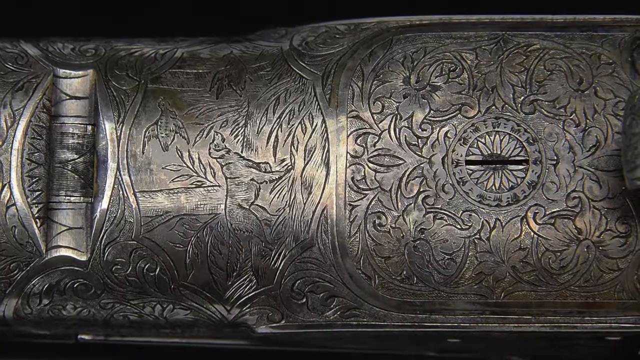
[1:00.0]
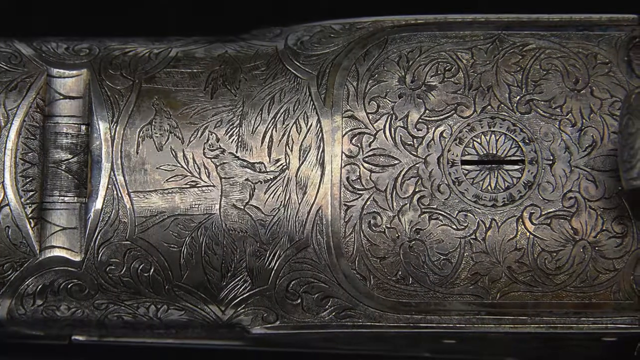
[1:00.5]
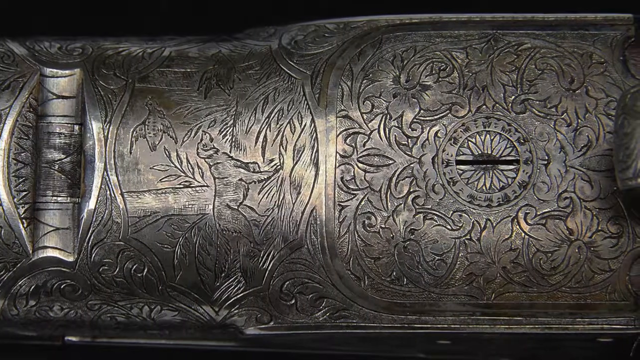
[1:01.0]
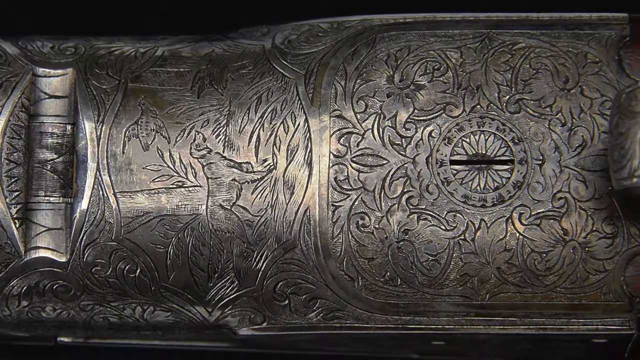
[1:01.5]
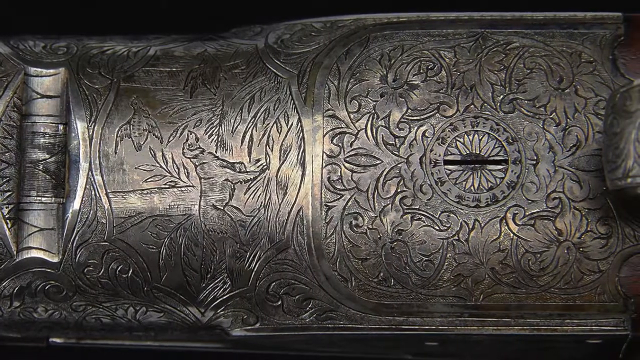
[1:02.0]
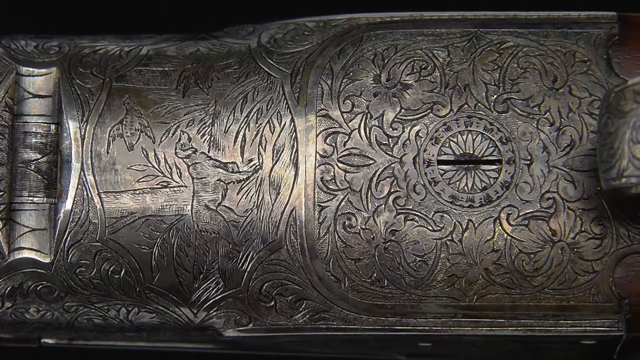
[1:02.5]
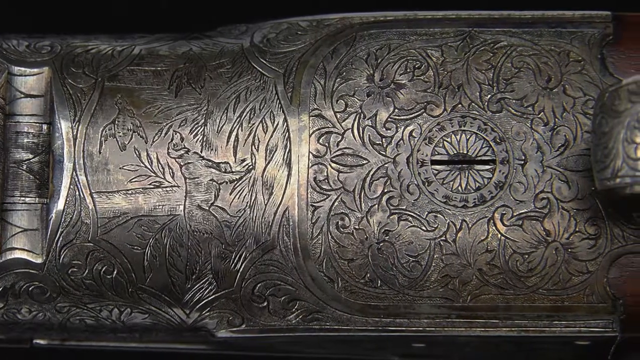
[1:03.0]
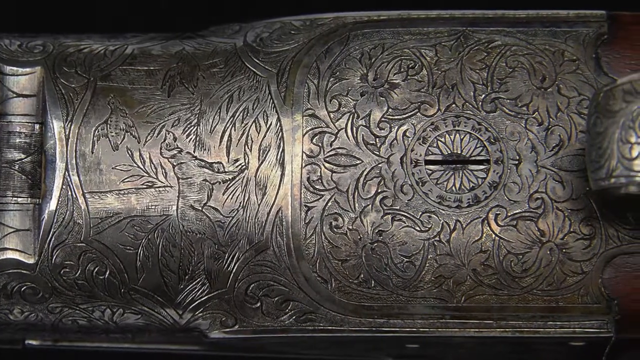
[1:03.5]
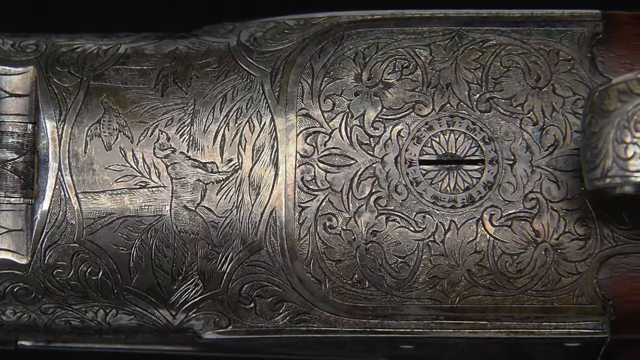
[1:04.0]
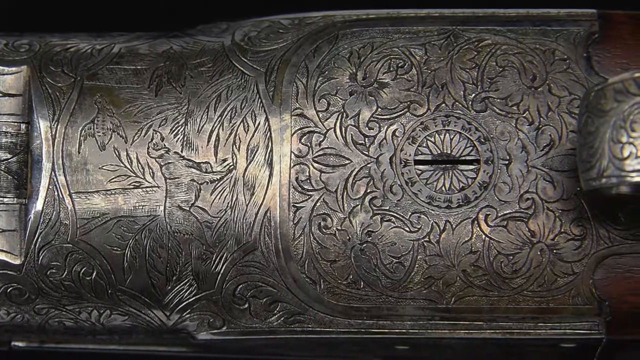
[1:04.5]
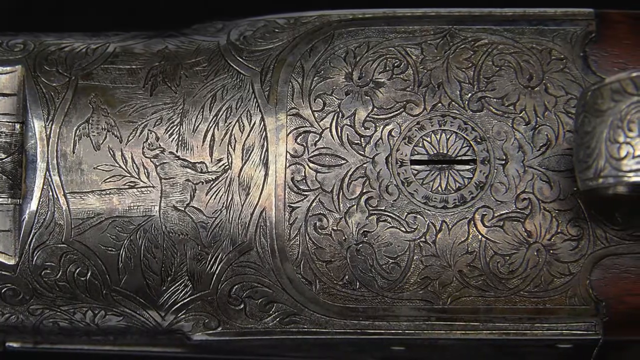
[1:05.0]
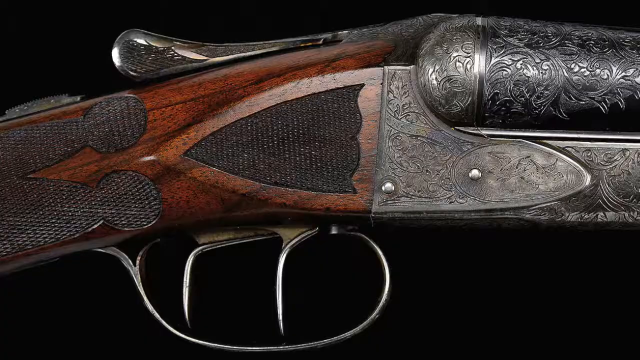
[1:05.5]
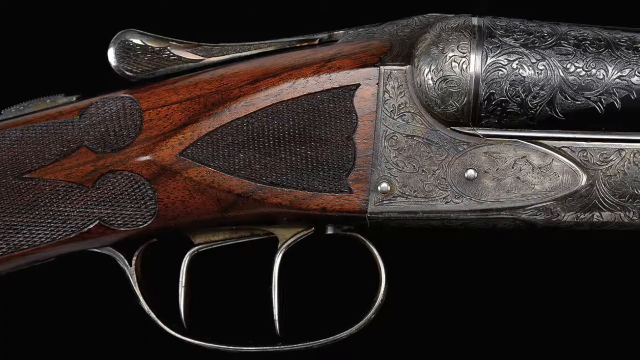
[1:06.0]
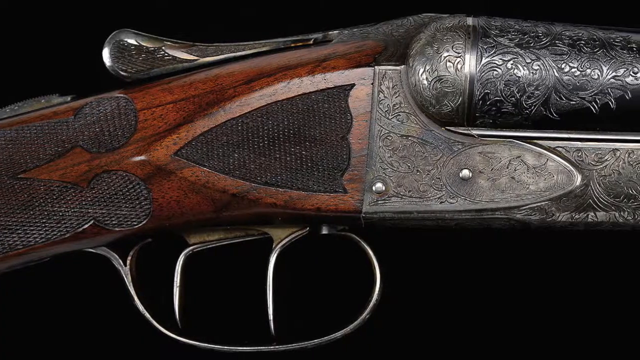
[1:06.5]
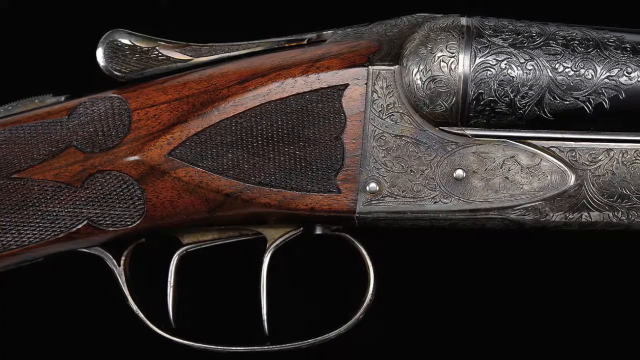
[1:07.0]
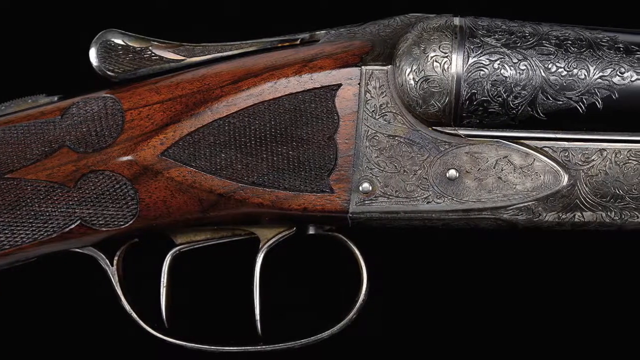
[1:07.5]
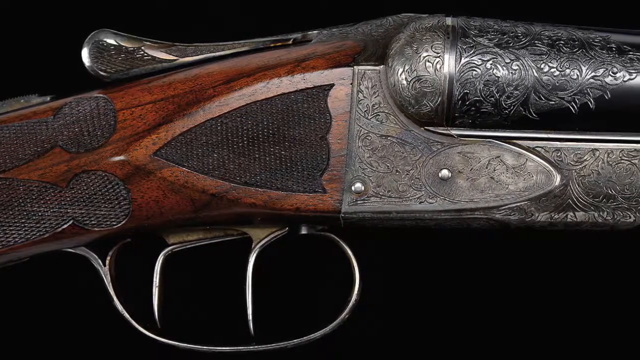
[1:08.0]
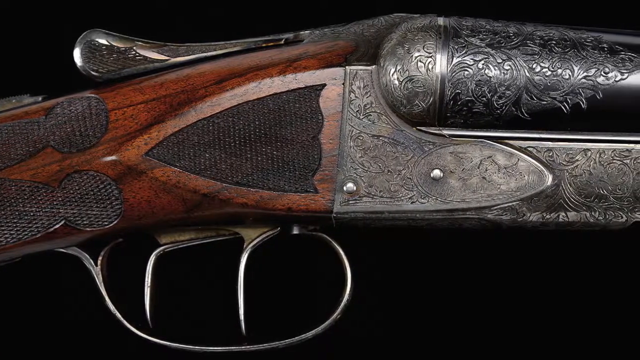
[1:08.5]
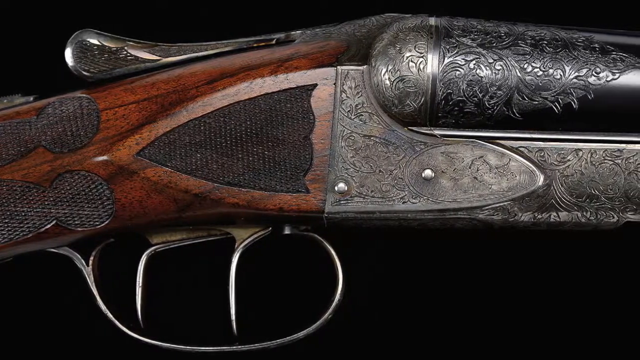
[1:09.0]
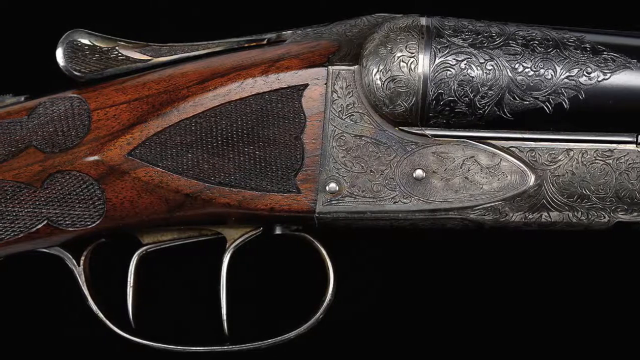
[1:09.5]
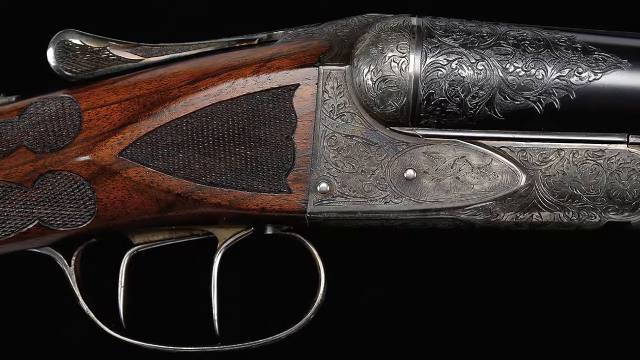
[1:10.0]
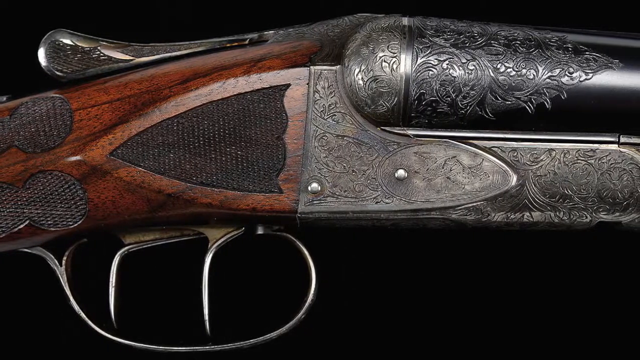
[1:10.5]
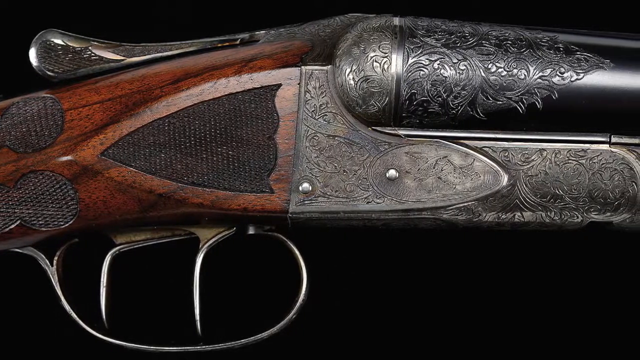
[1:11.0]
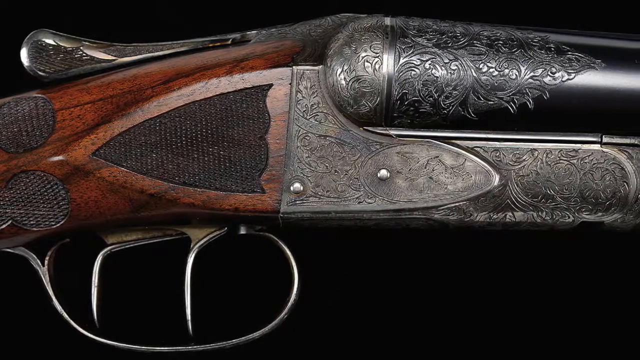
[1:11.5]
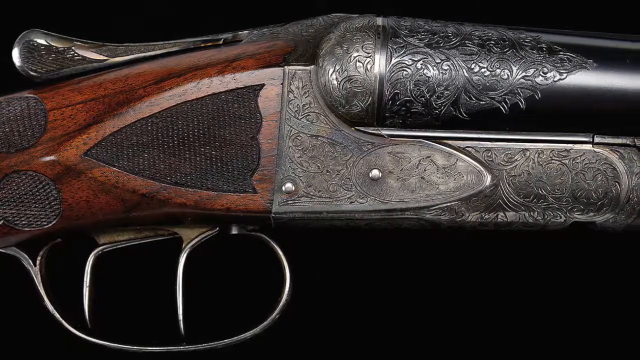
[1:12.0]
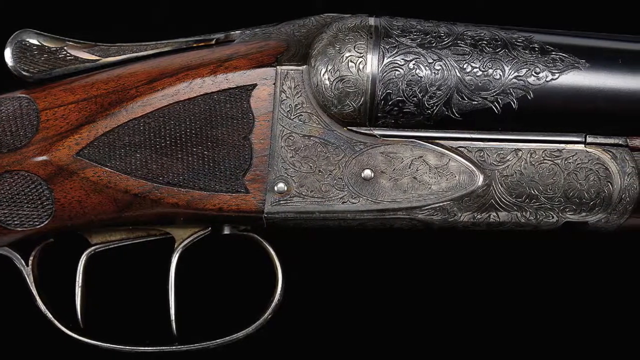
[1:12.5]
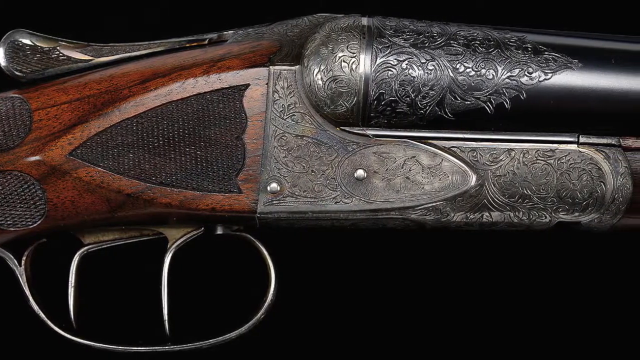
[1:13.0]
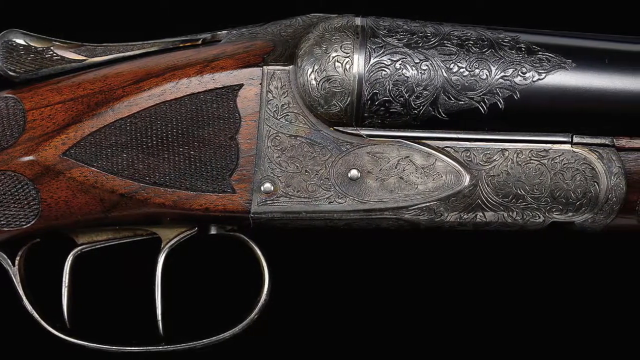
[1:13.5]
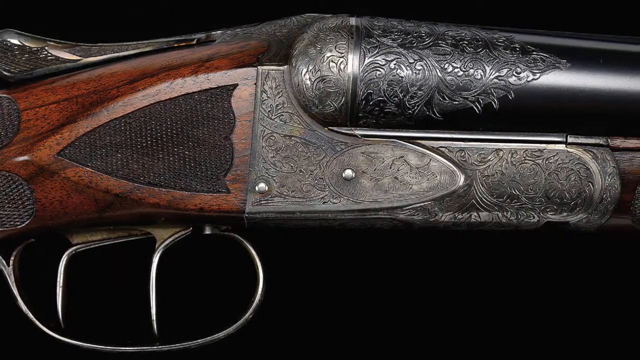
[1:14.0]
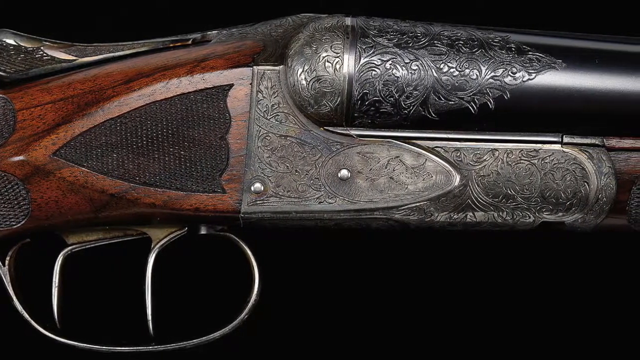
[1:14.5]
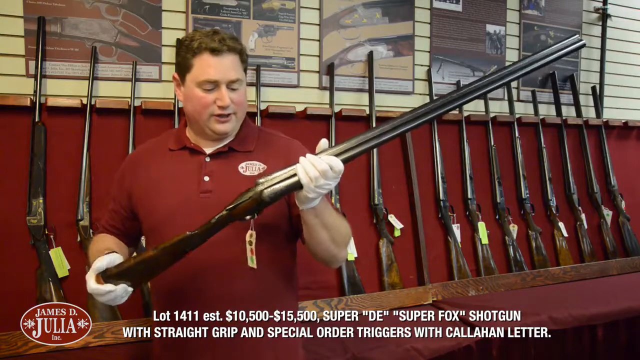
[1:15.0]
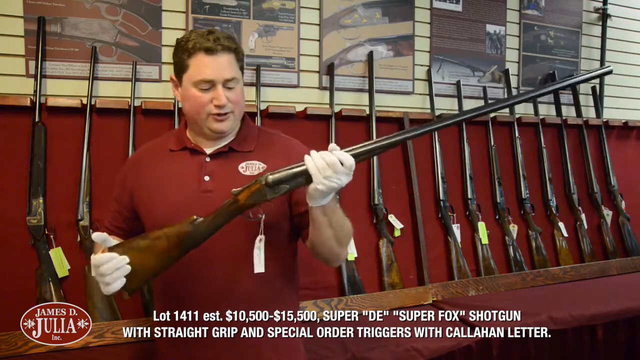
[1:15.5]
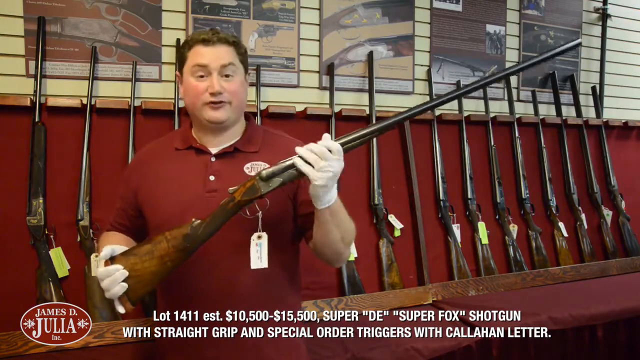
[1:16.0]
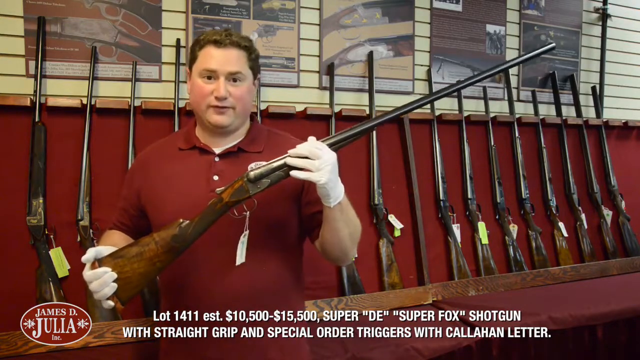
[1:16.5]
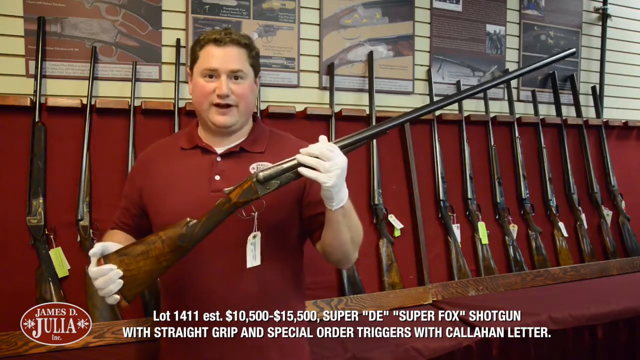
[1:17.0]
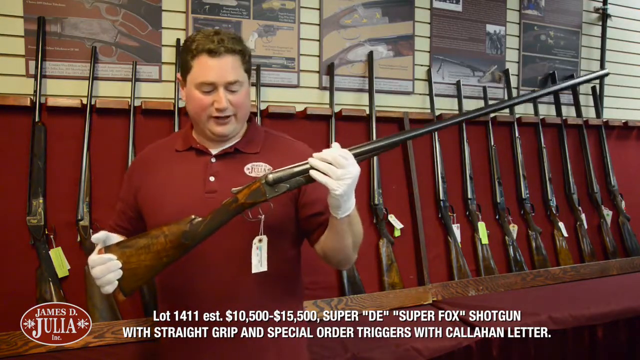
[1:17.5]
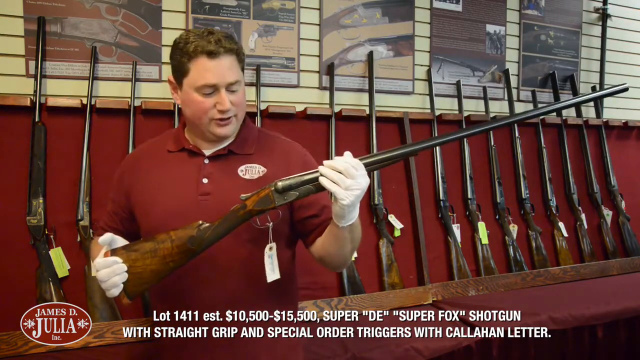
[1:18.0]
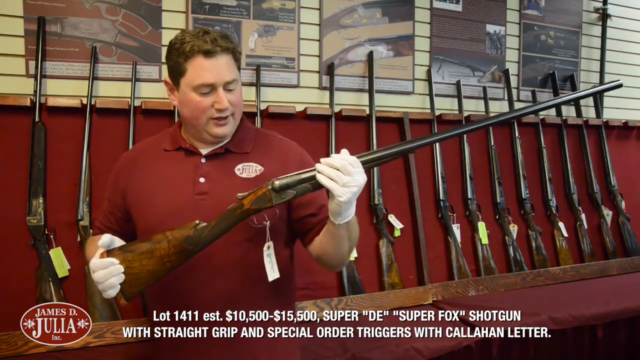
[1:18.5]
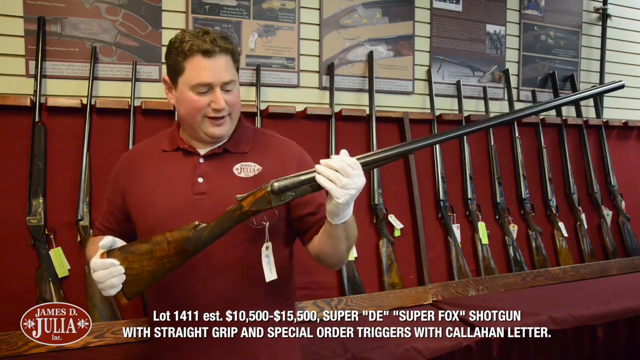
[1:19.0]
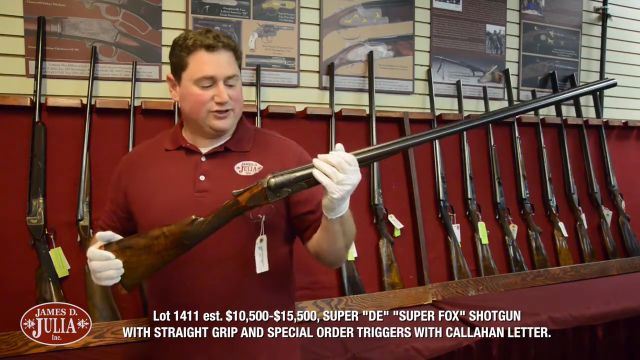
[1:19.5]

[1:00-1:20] A close view shows what looks like possibly the top or the side of a rifle barrel, with a lot of detail carved into the metal: a dog, what looks like a bird above the dog, and what looks like floral designs. The video kind of pans from left to right to show more of the gun. Next, the gun is shown on its side from a side view, where the wood of the handle and the metal of the barrel kind of meet. The wood is a dark grain wood with visible grain detail, and the metal shows more detail, kind of more floral details on the side. The camera pans from left to right, showing more of the side of the barrel. The video then cuts to the man in the shop with the long-barreled rifle in his hands. He holds the rifle upright as before, looks at the camera, and appears to be discussing the rifle in detail. He then looks back down at the rifle and turns his hands to turn the gun a bit on its side.